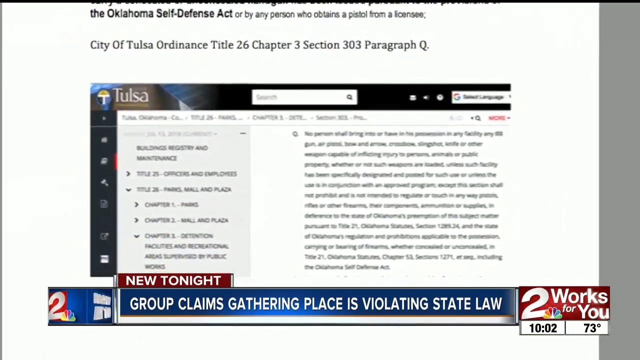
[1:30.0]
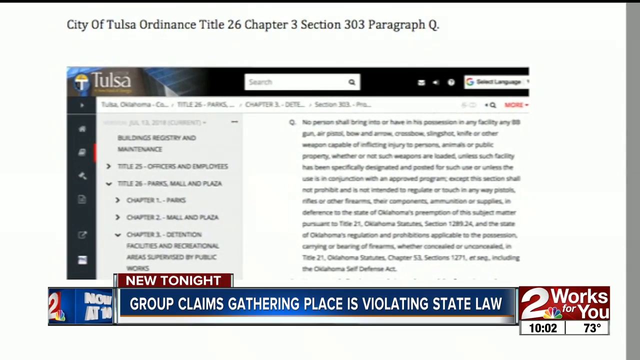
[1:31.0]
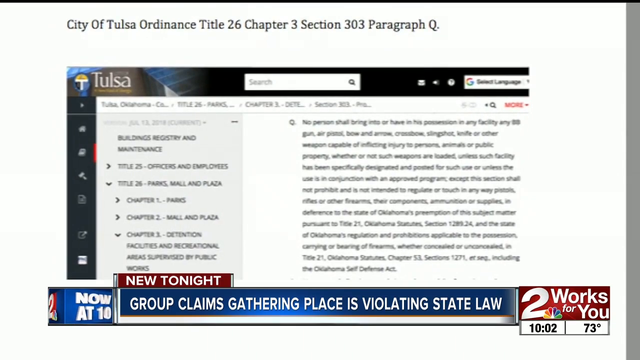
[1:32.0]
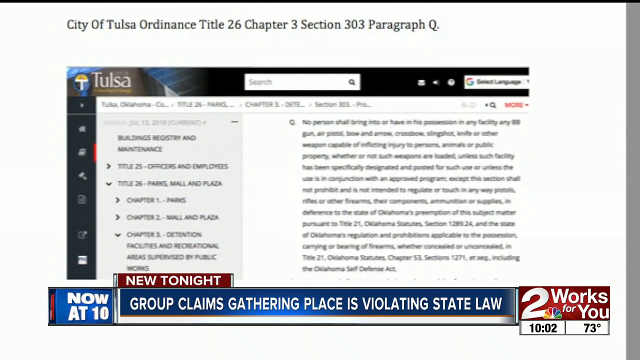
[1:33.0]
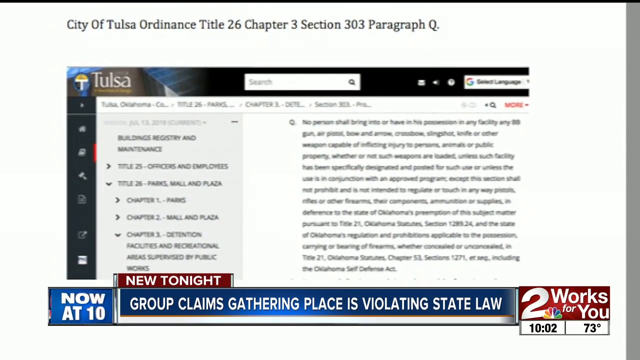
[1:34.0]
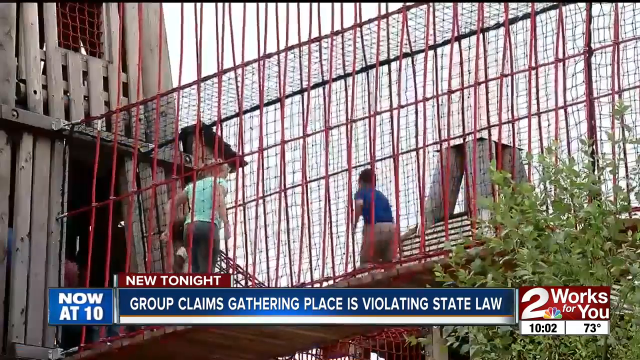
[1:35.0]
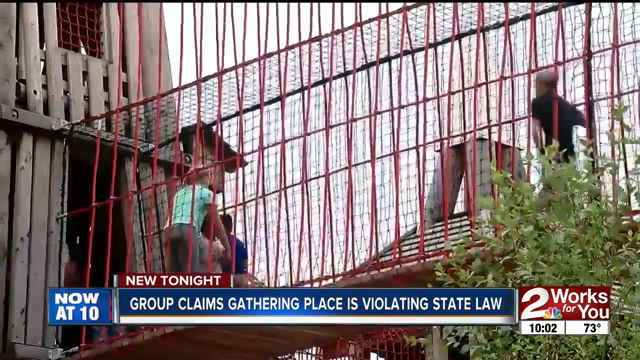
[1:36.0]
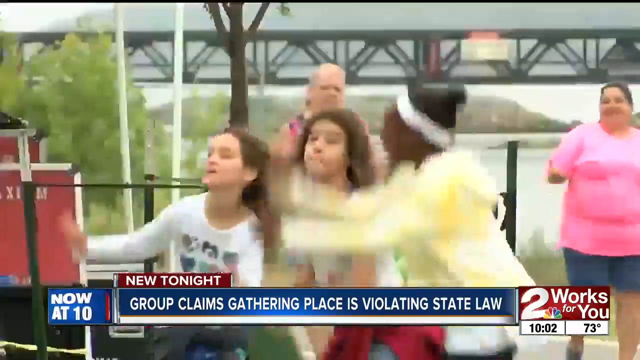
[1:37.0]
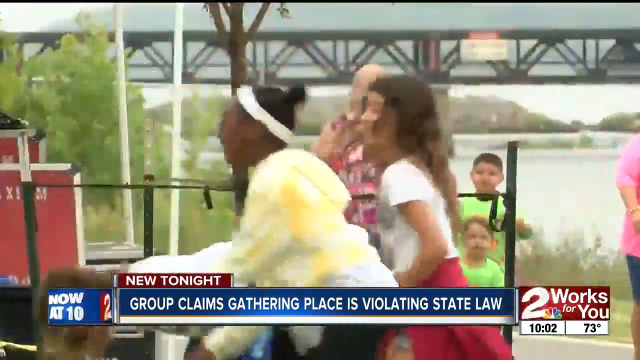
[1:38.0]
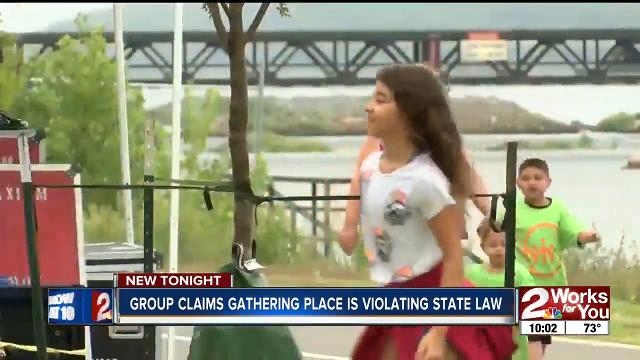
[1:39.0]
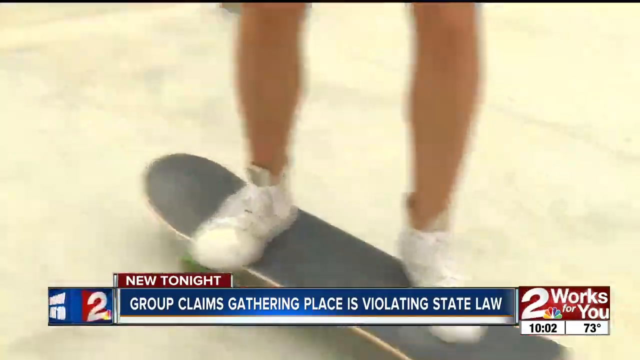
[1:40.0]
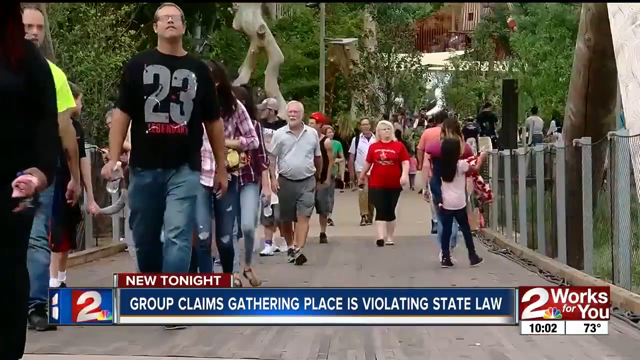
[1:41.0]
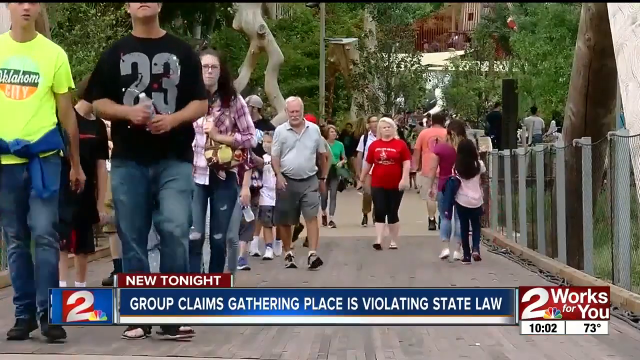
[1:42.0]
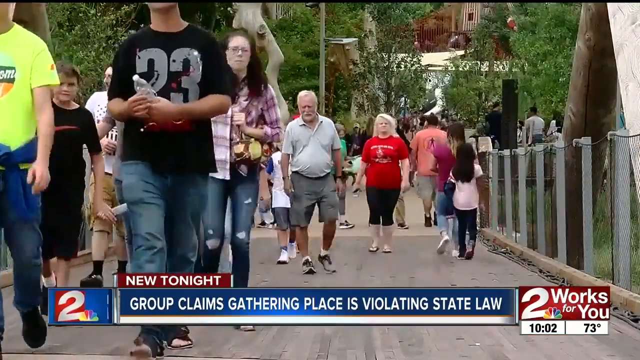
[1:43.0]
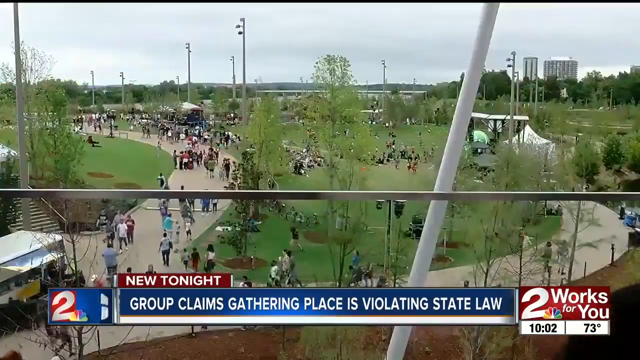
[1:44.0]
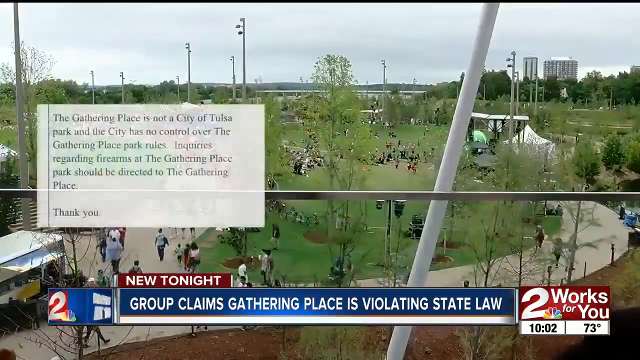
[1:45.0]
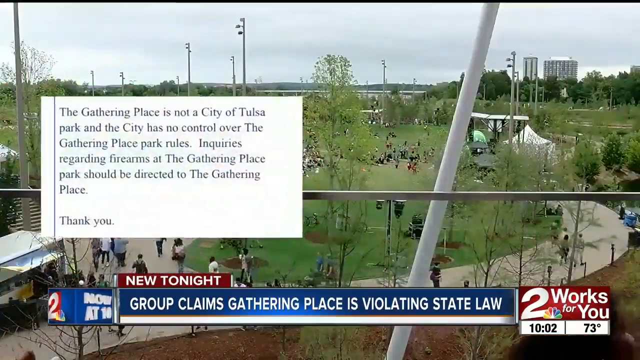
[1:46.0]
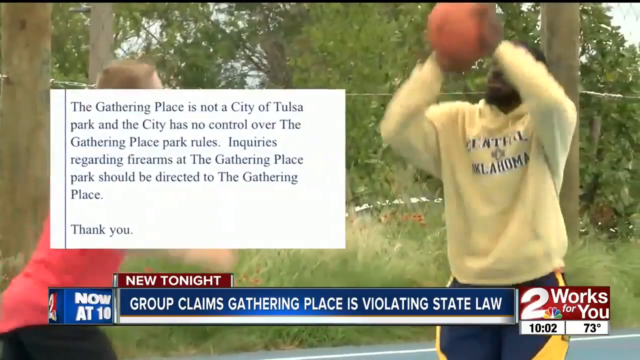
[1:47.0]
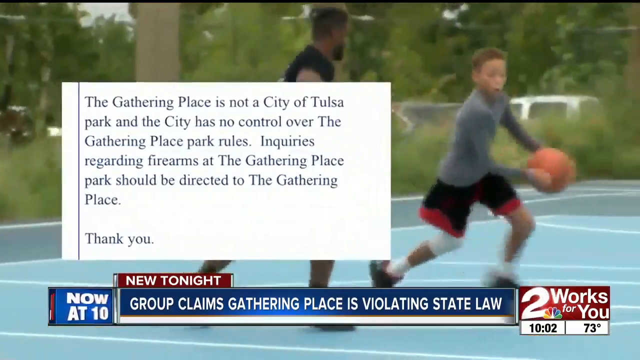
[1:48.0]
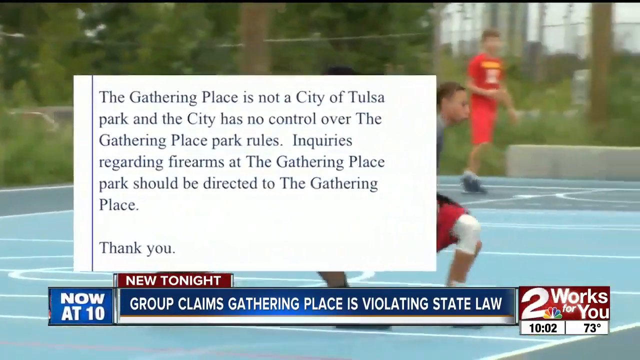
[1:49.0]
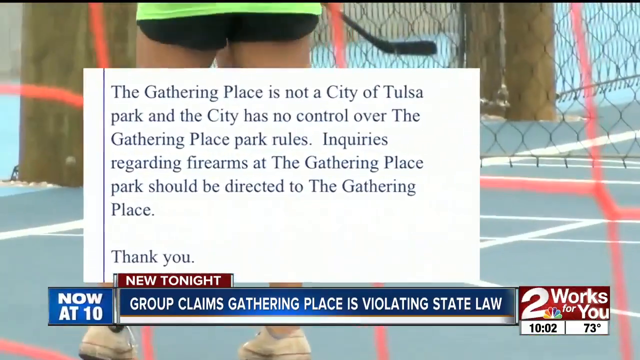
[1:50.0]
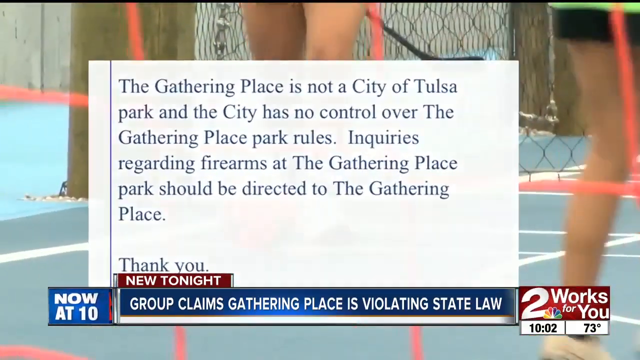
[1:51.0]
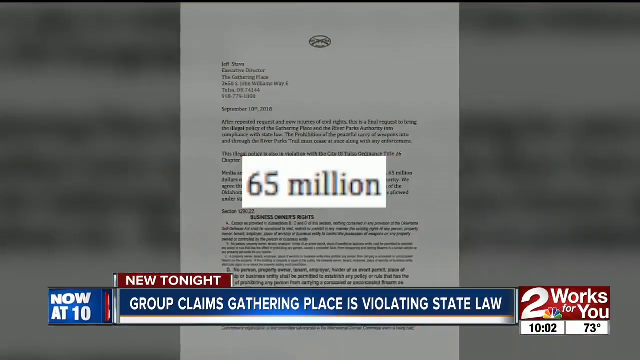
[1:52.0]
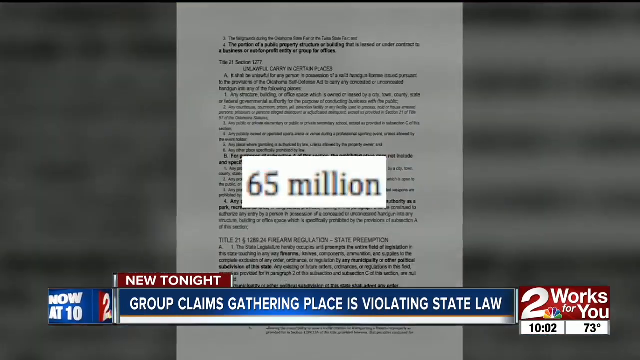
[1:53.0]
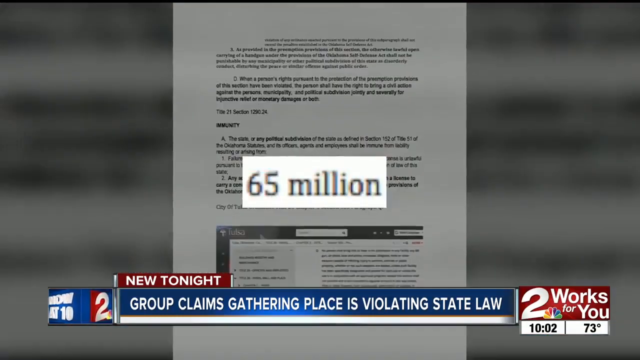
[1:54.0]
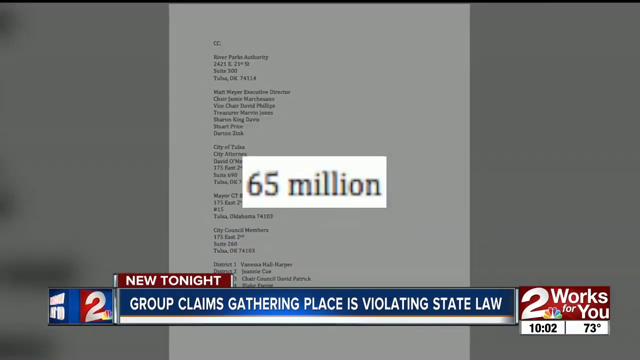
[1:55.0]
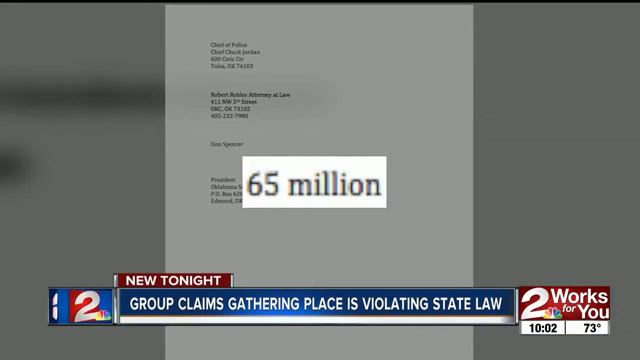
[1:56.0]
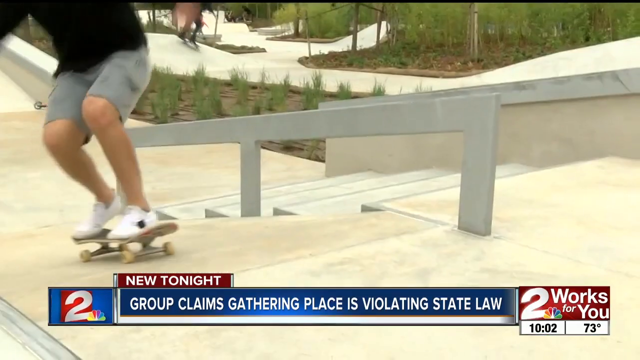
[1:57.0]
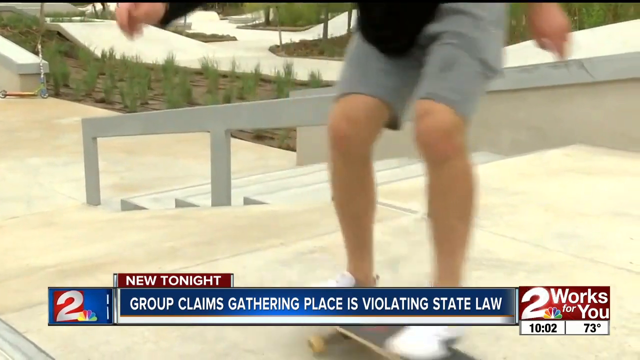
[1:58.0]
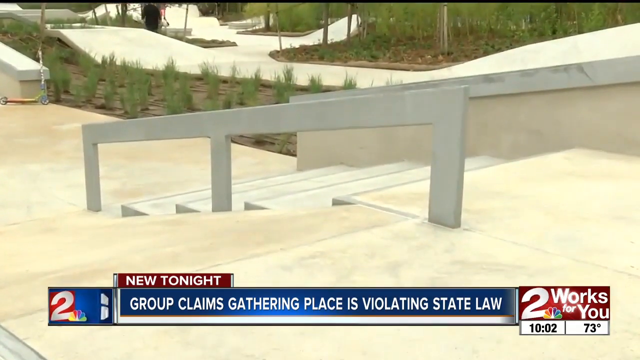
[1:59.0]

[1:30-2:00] A paper filled with information is shown on the screen. A child runs around a bridge set that has red wiring and looks like it is made of wood. A child jumps around while parents walk in the background. A person rides a skateboard. Crowds of people walk next to a bridge with trees in the background. A large park is filled with people, some playing basketball. A white on-screen message says the gathering place is not a park the city controls and that it "has no control over the gathering place", over a background of children playing basketball and soccer. A page says "16 million", and different pages are shown while a child skateboards.